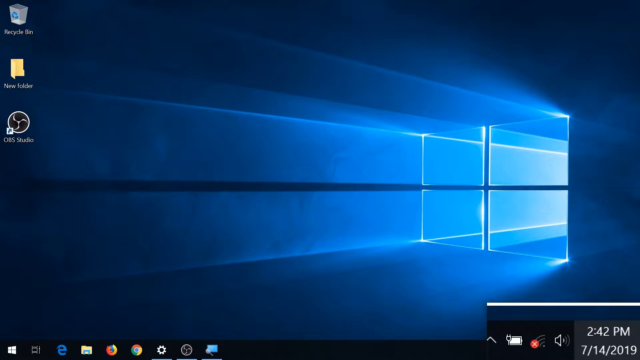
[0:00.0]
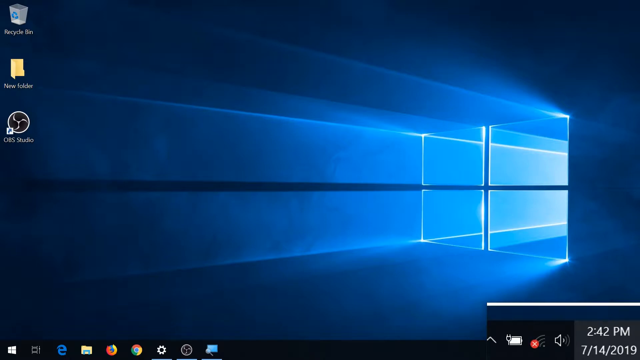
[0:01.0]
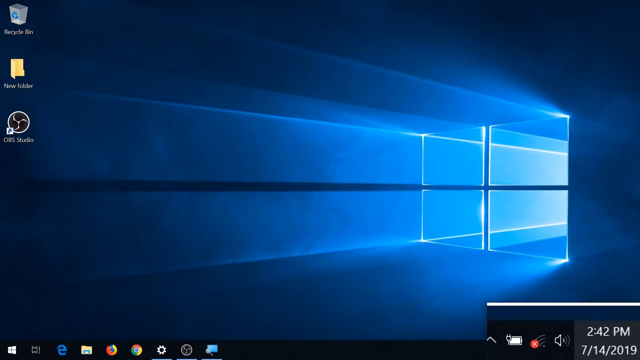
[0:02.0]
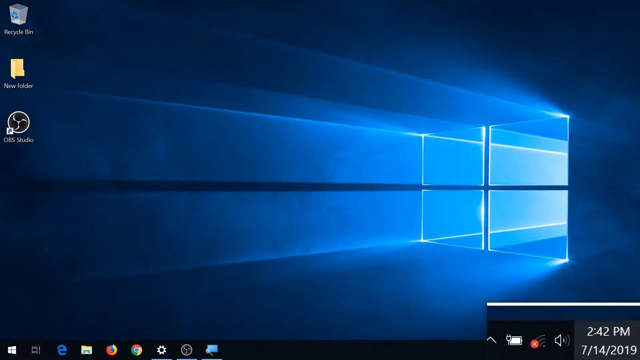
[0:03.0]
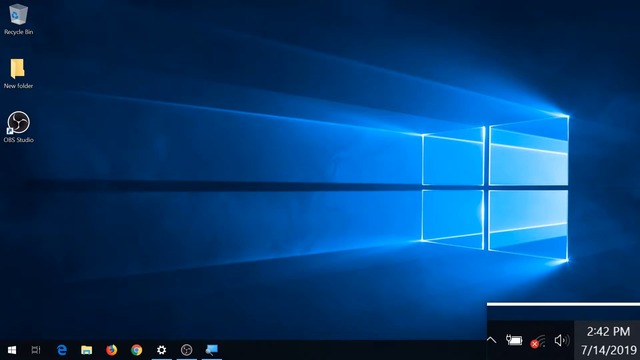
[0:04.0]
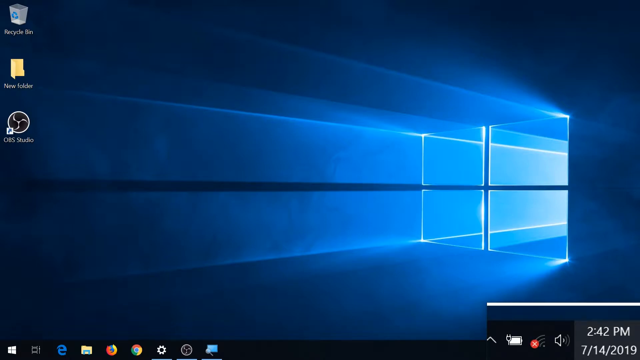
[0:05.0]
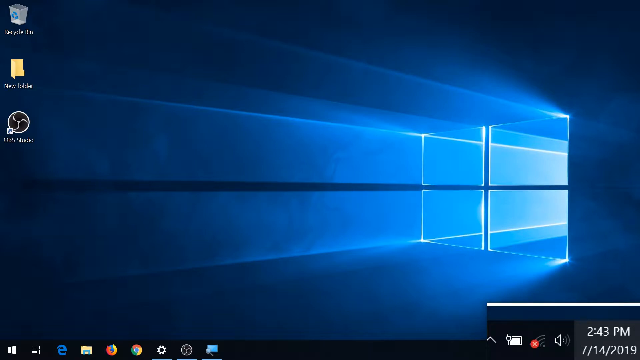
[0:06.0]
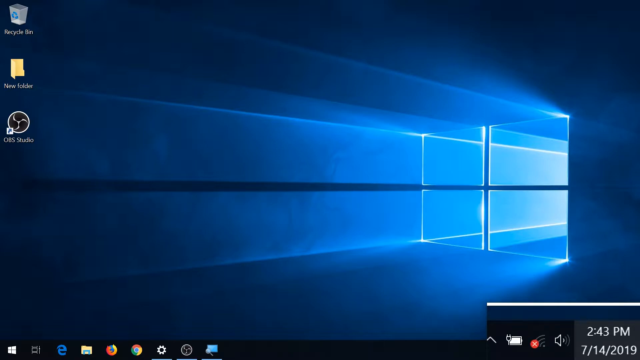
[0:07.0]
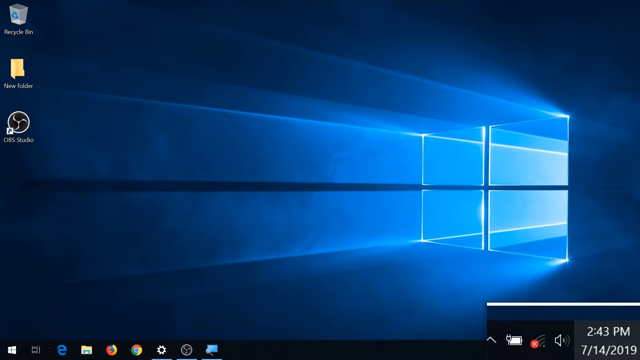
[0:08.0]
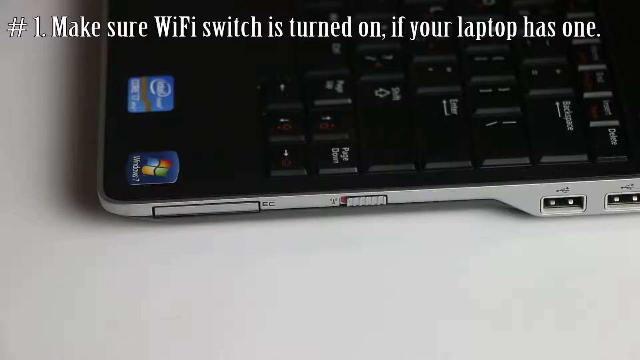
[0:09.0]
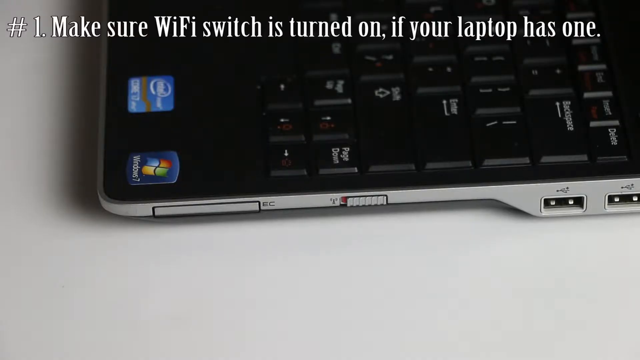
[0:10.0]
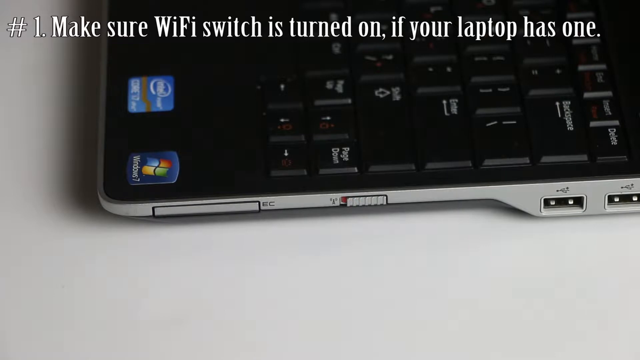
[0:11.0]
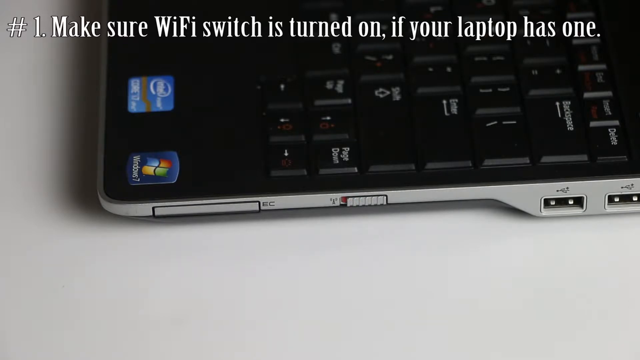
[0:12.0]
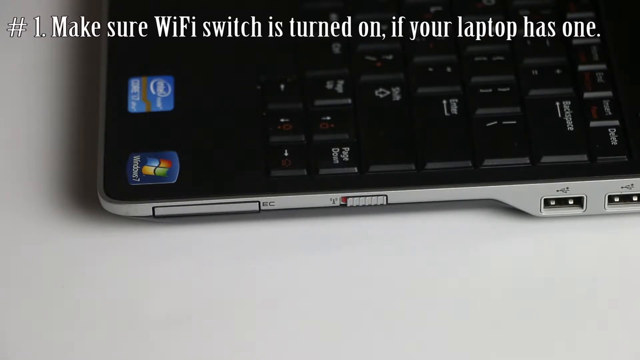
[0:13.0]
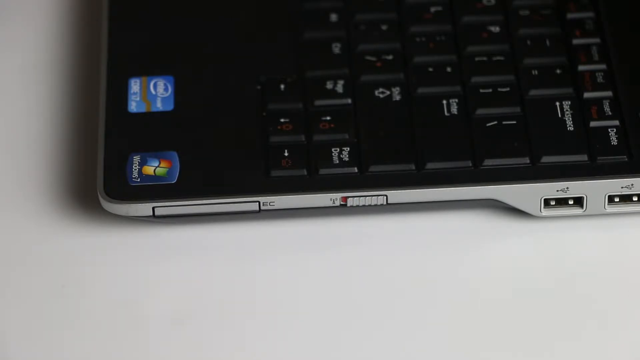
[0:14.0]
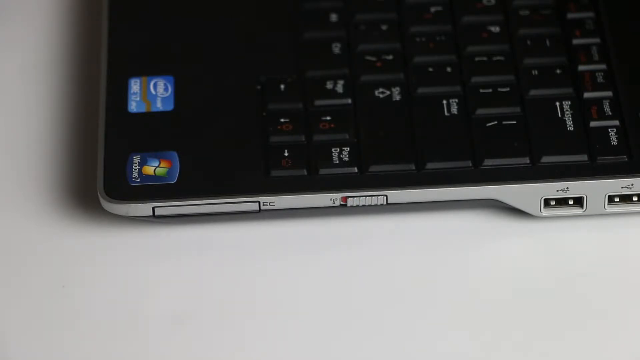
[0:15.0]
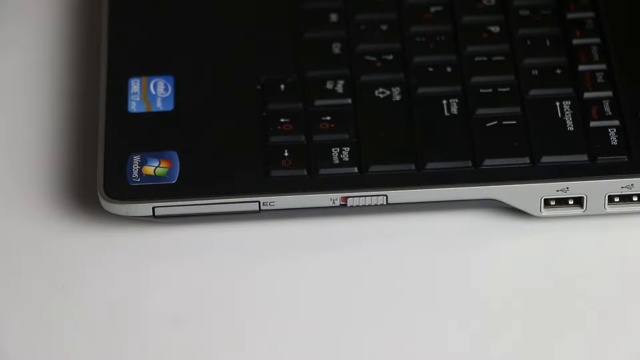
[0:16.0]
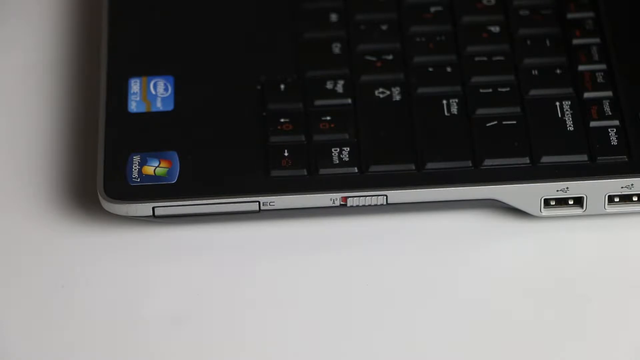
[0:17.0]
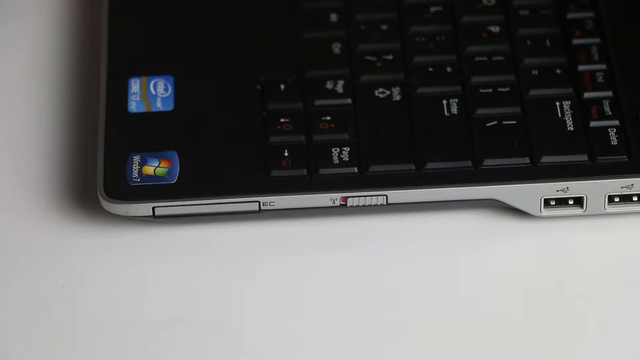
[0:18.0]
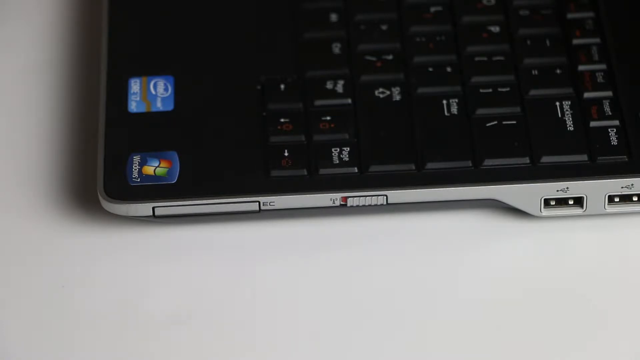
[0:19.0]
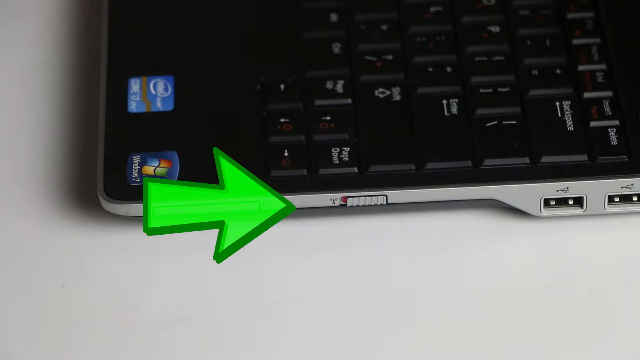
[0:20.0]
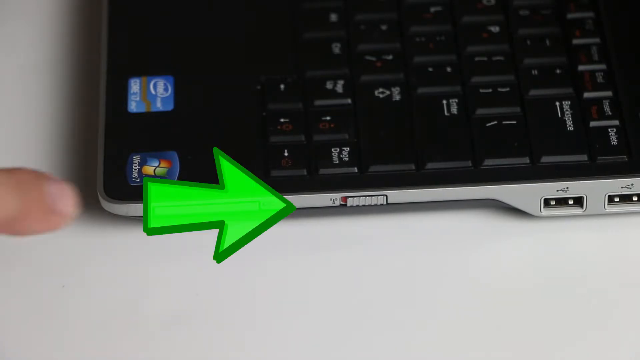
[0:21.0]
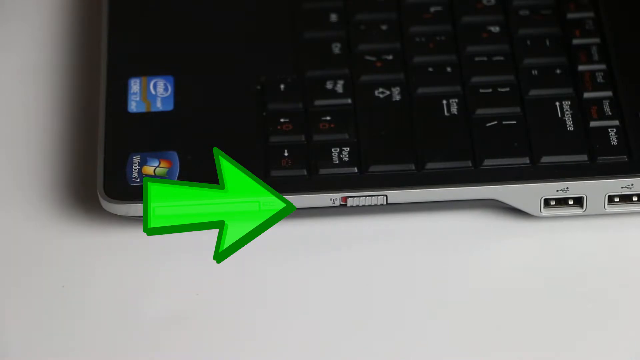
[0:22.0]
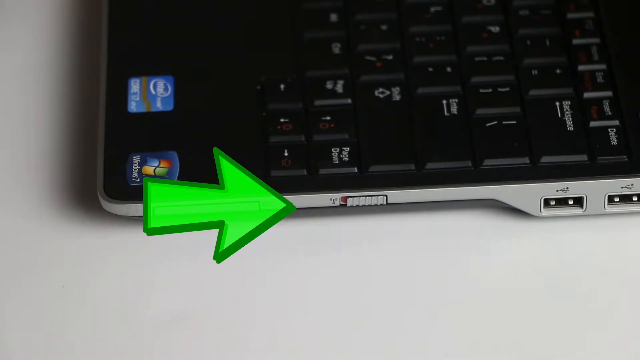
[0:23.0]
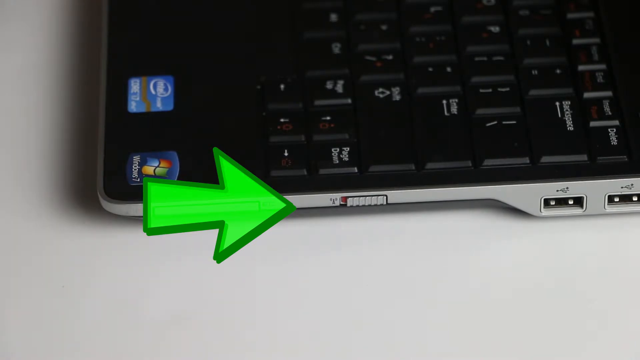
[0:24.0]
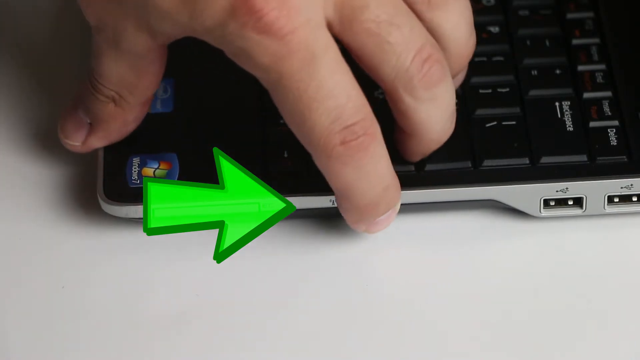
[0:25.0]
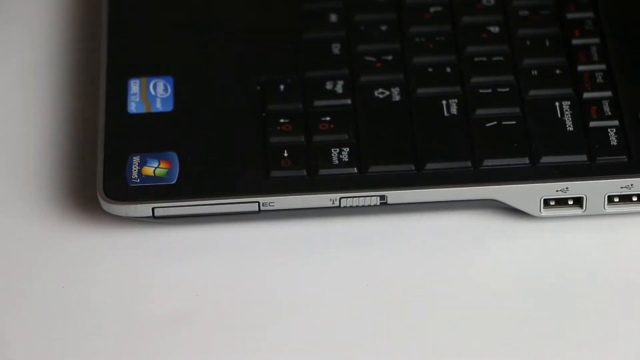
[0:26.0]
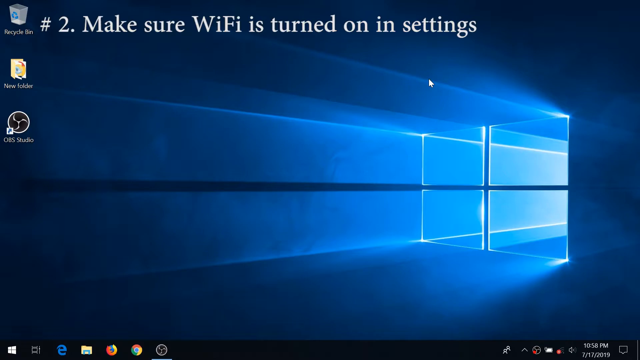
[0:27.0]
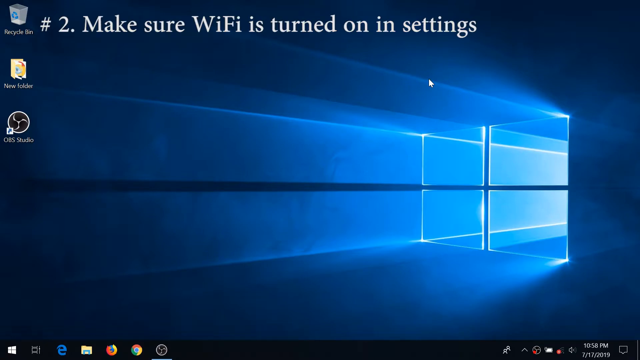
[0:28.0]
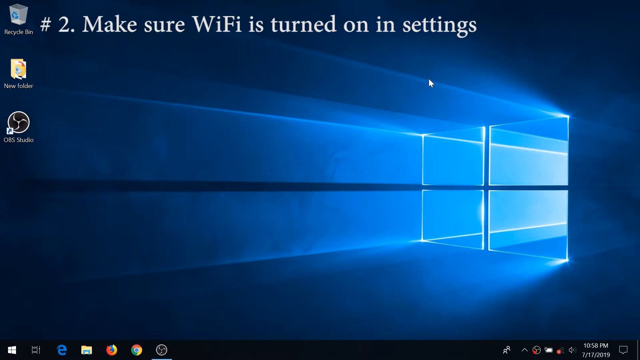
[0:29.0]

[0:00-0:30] A Windows desktop is on screen, identifiable by the four-panel Windows logo. The outer edges of the screen move from an ombre of navy into a lighter blue, with light blue lines coming from behind and moving through the Windows logo. On the left side of the screen are three icons: the Recycle Bin, shown as a grey recycling bin with a blue recycling logo on the front; just beneath it, a yellow folder named "New folder"; and underneath that, a circle icon that looks like it has a propeller in the middle, named CBS Studio. The screen then changes to a side view of a laptop at the keyboard, with a line of text across the top that says "Number one Make sure Wi-Fi is switched on if your laptop has one".